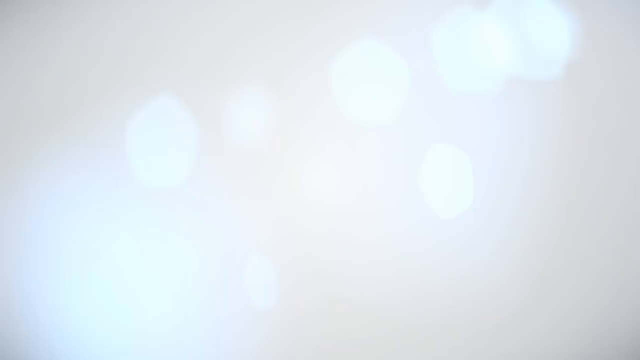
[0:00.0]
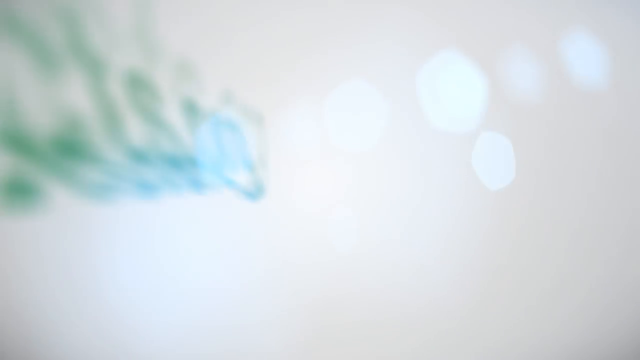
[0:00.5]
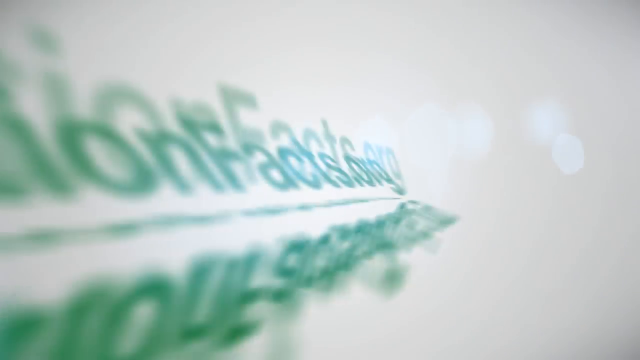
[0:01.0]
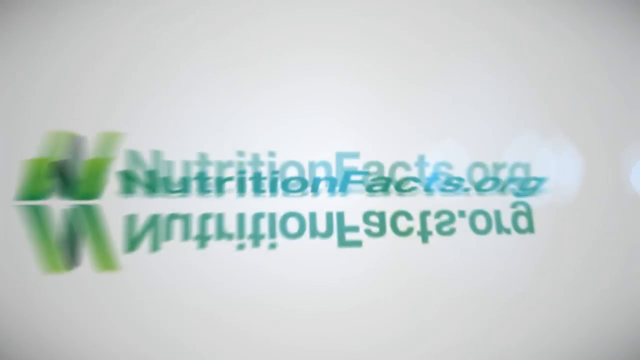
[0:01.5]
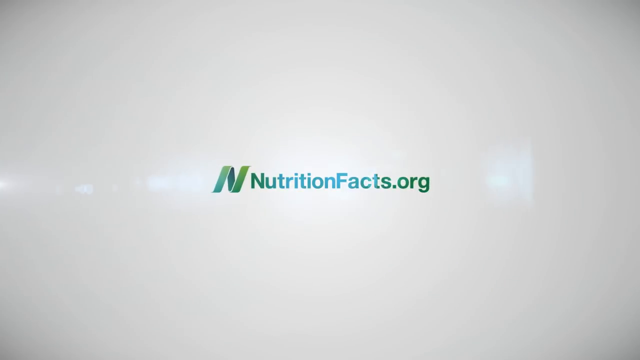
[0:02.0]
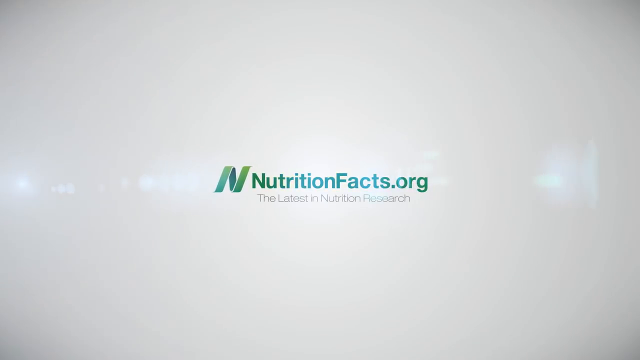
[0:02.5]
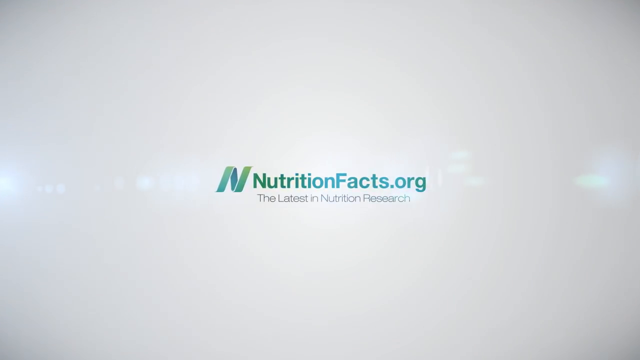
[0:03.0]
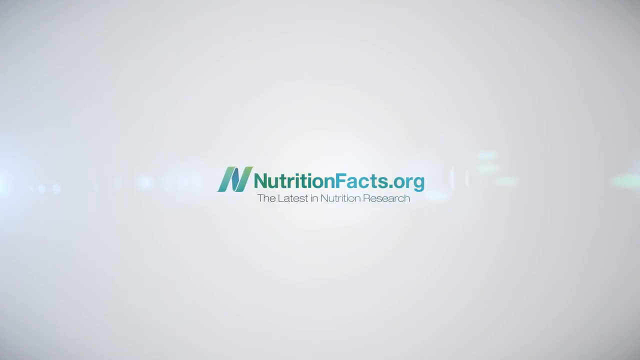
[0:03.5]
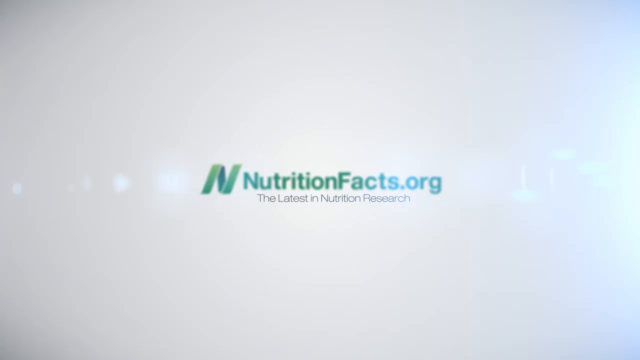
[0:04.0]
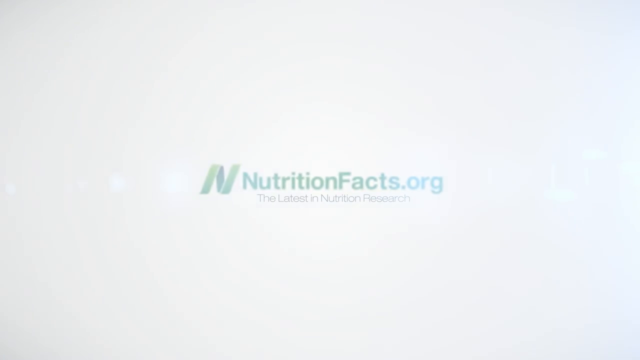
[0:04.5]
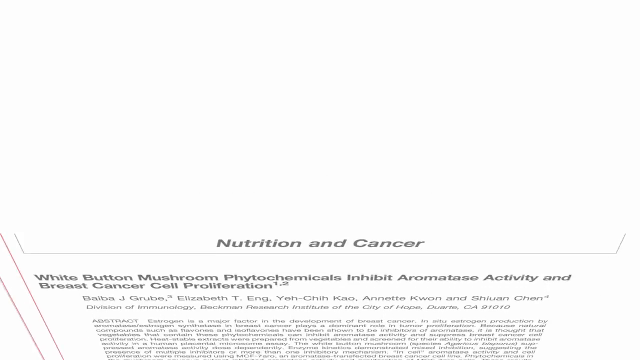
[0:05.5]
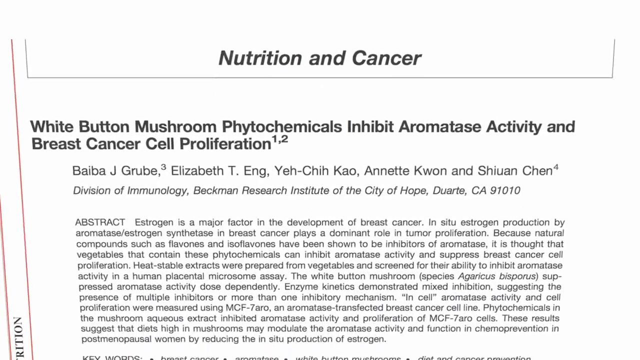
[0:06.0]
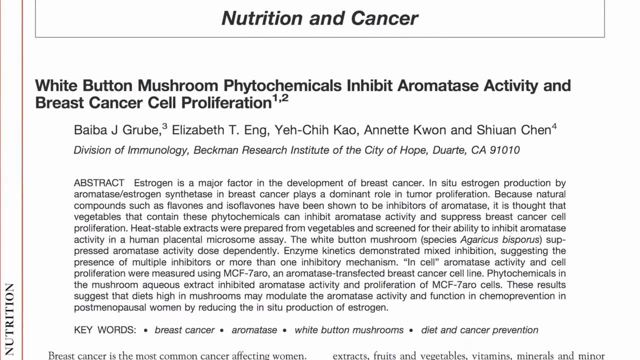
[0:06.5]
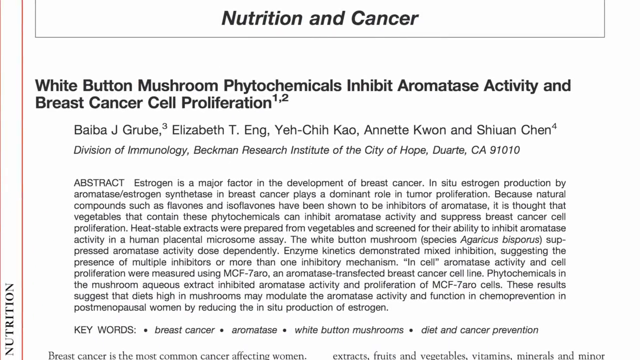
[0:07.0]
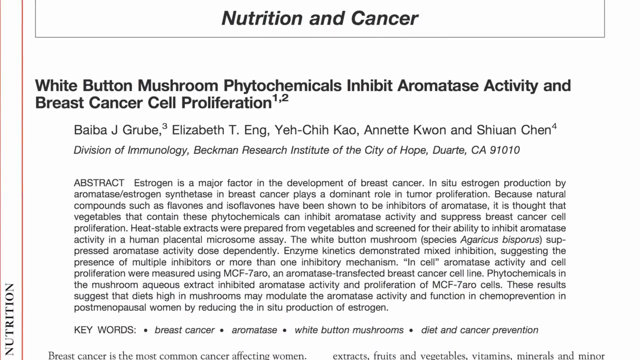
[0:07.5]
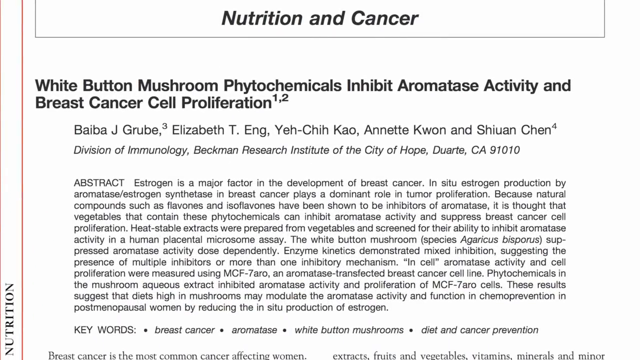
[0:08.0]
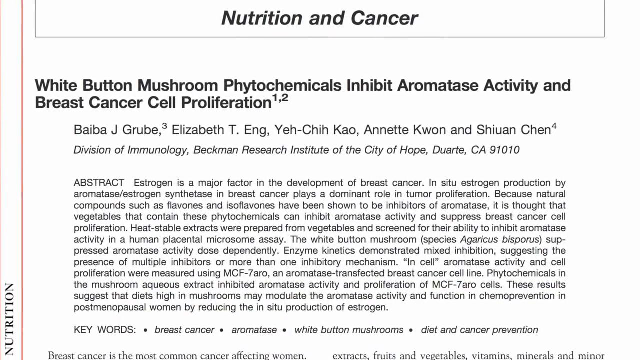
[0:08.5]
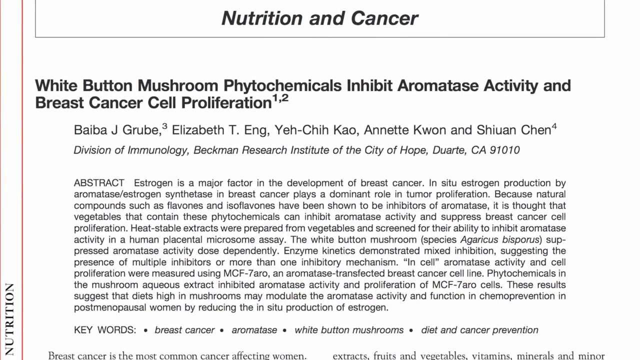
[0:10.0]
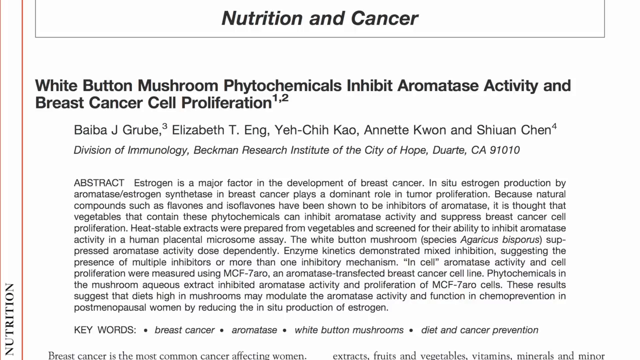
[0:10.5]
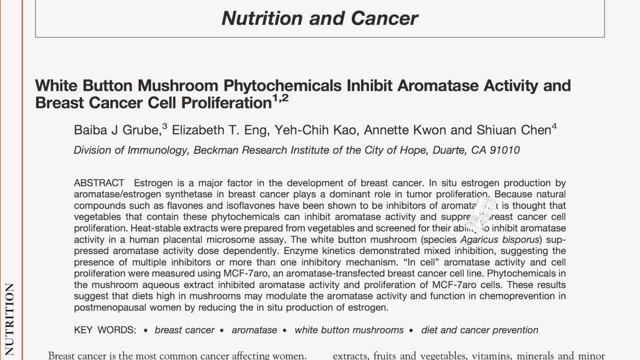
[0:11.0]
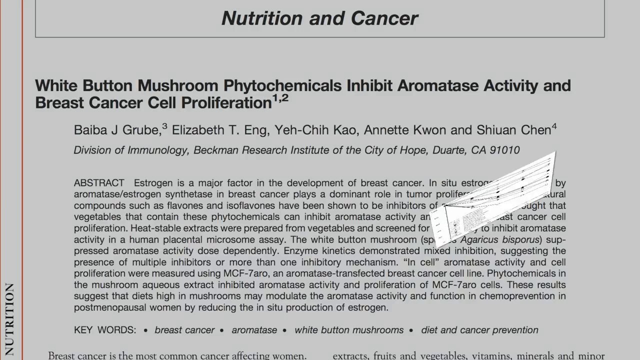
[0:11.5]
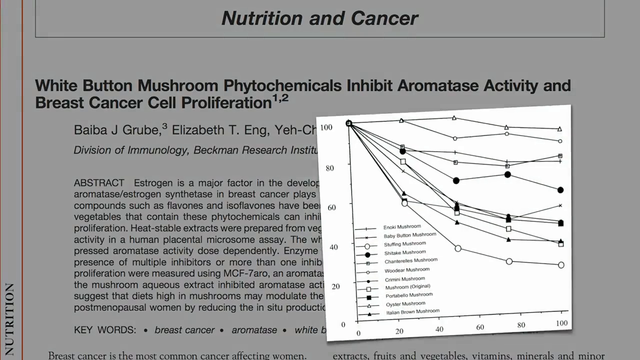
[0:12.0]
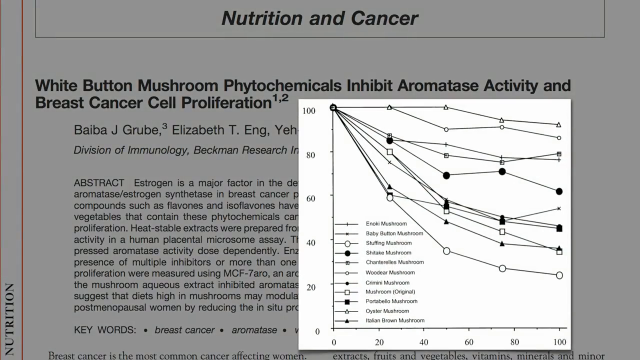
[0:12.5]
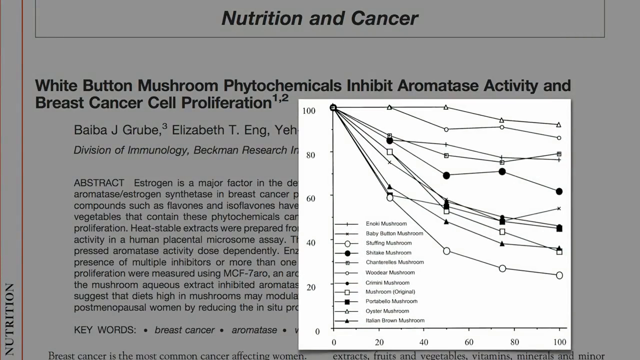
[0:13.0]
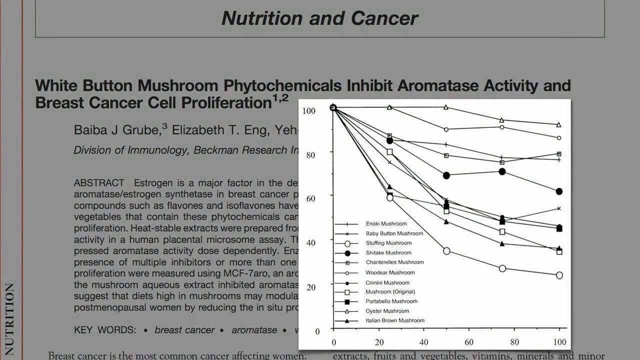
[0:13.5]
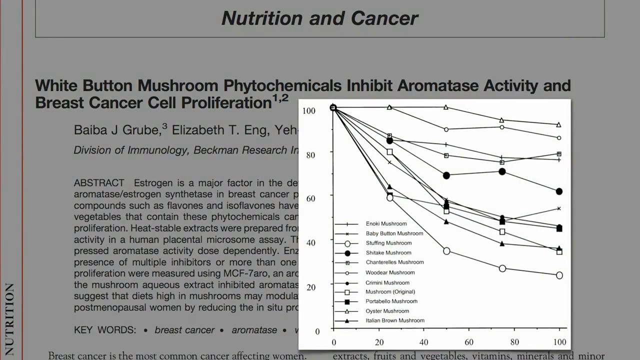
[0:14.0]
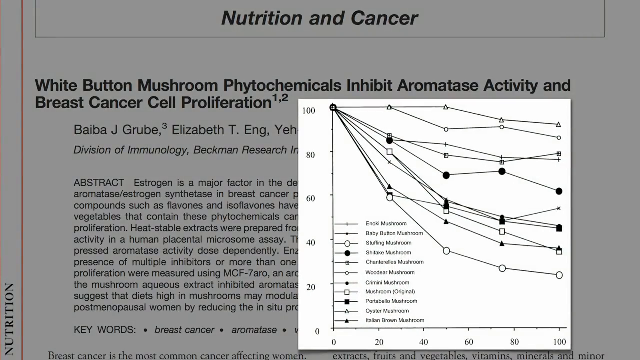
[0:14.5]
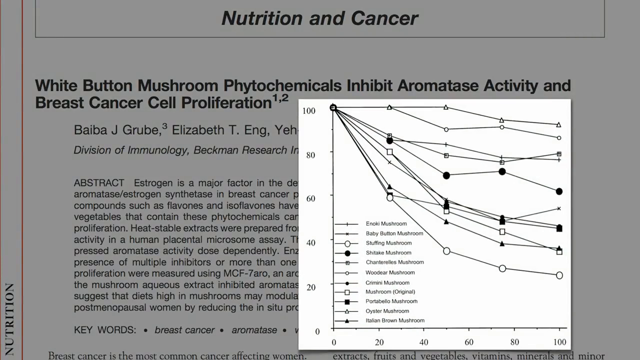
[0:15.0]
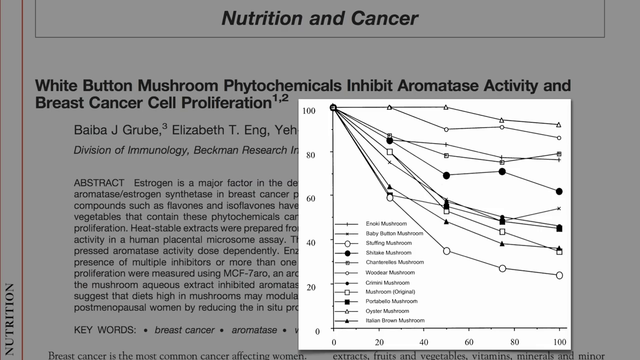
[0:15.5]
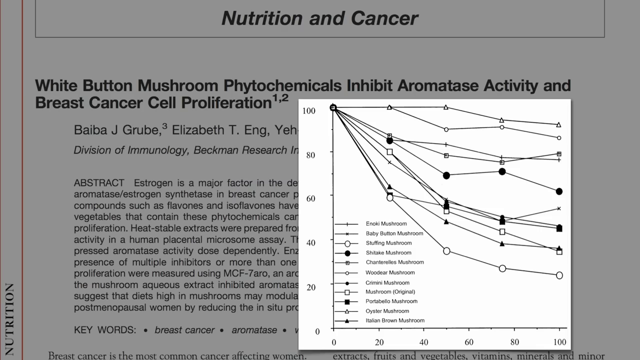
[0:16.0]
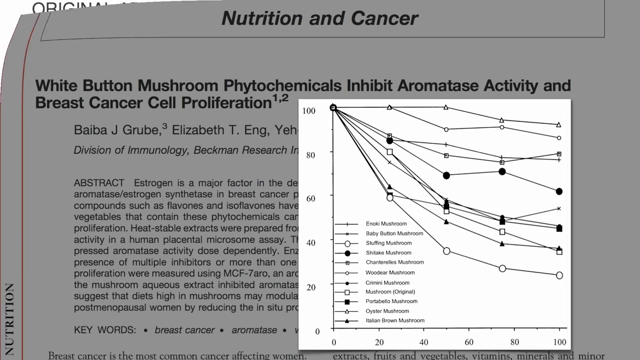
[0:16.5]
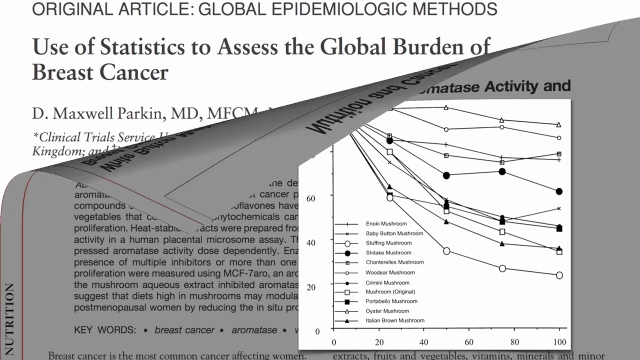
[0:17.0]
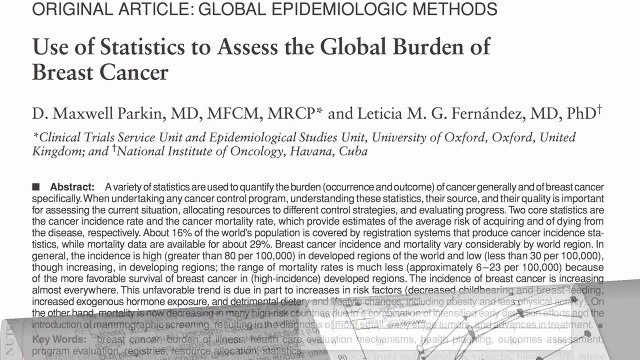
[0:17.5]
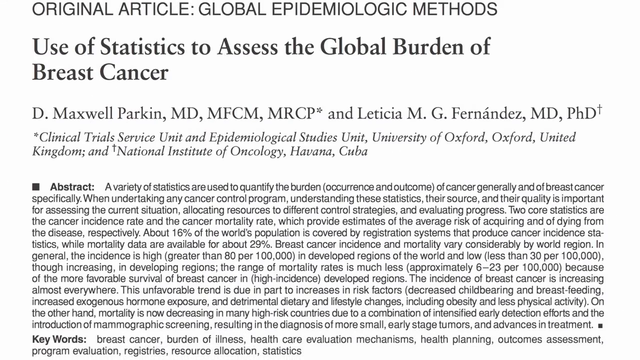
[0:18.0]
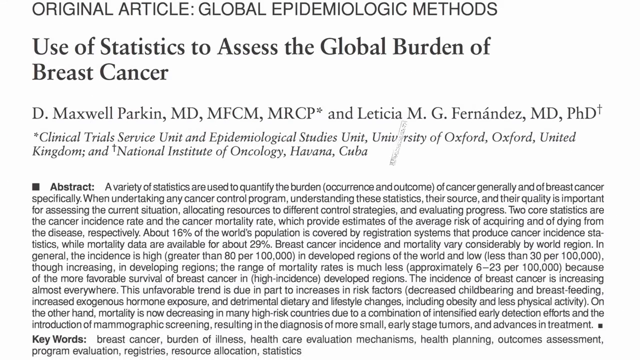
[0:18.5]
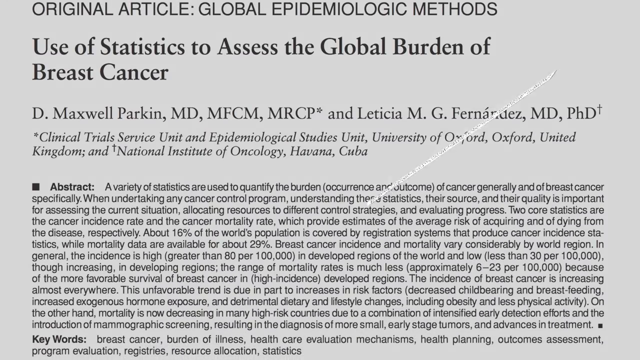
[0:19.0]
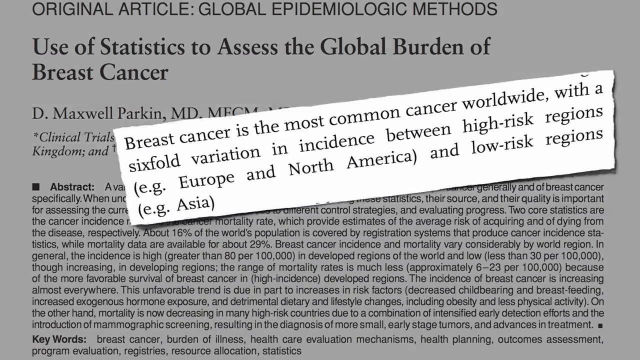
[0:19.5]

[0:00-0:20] On a white background, green writing moves in an animated fashion from the bottom left side of the screen, sweeping across and ending up in the middle. There is a green N logo followed by text that is green, transitions into blue, and turns back to kind of green towards the end; it reads "nutritionfacts.org", with "the latest in nutrition research" underneath in thin black text. The text pops out and enlarges a little with a slight shaking animation as the video transitions to the next screen. An article rises from the bottom of the screen and moves upwards to cover the whole screen in black text; it is an article about nutrition and cancer titled "White button mushroom photochemicals inhibit aromatose activity and breast cancer cell proliferation". A list of the authors follows, and the abstract is visible with the keywords underneath it. From the lower right middle of the screen, a white square flips, rotates and moves towards the center on the right-hand side, covering 40 to 50 percent of the screen; it seems to be a graph of different mushrooms. The graph is not labeled; it has values from 0 to 100 on the y-axis and from 0 to 100 on the x-axis, with different lines and different symbols at each line point representing each mushroom. A page-turning transition starts in the top left-hand corner and folds downwards, revealing a different article underneath that says "Original Article Global Epidemiological Methods", with the title "Use of Statistics to Assess the Global Burden of Breast Cancer" underneath. Below the title are the list of authors, then the abstract and the keywords. In another partial transition, a white rectangle appears in the kind of upper mid-right section of the page, rotates, enlarges and moves over the authors section. It has the text "breast cancer is most common cancer worldwide with a six-fold variation in incidence between high-risk regions (e.g. Europe and North America) and low-risk regions (e.g. Asia)".